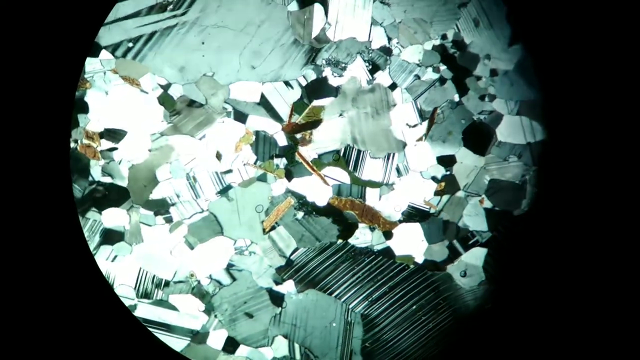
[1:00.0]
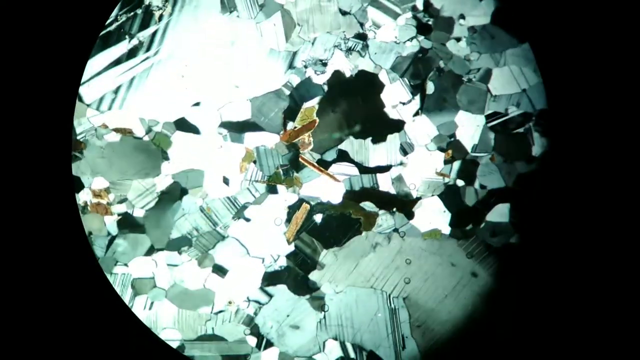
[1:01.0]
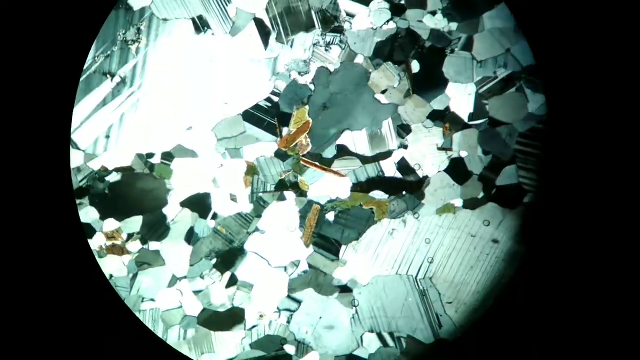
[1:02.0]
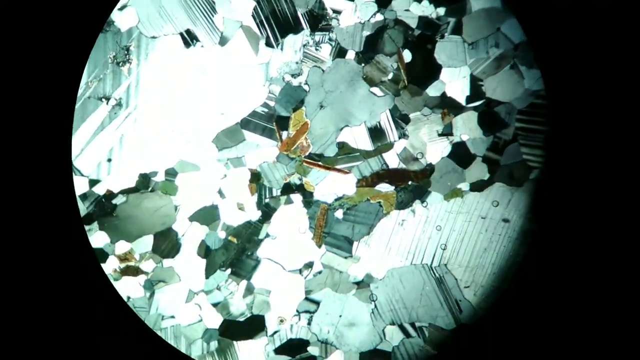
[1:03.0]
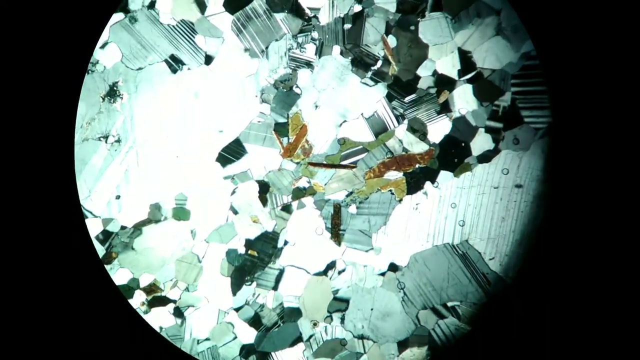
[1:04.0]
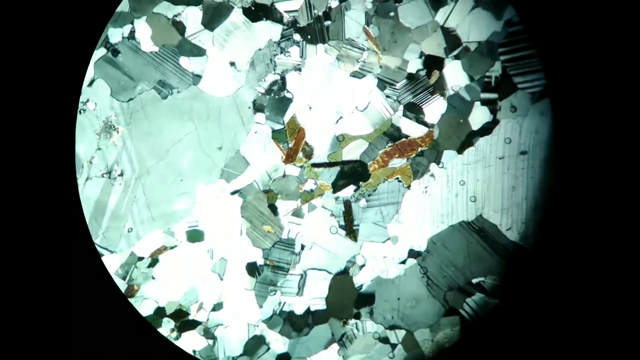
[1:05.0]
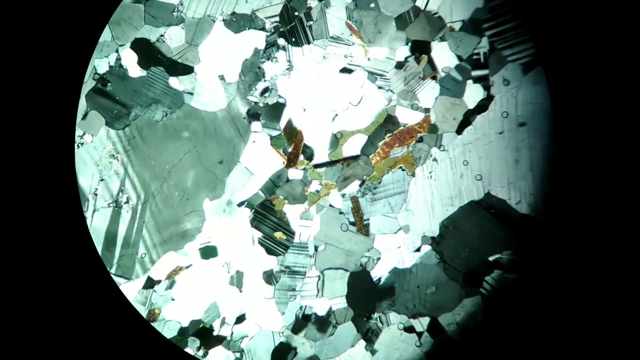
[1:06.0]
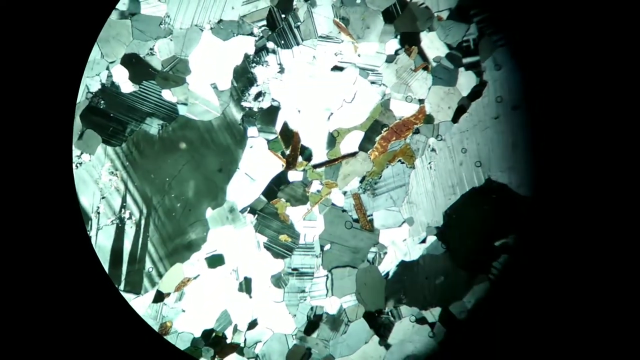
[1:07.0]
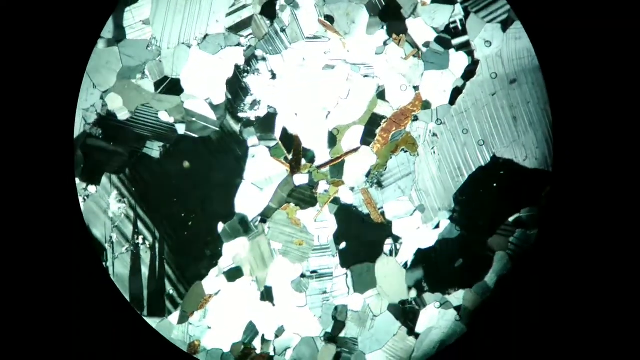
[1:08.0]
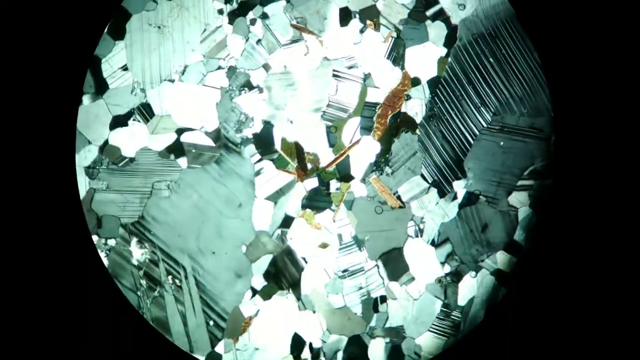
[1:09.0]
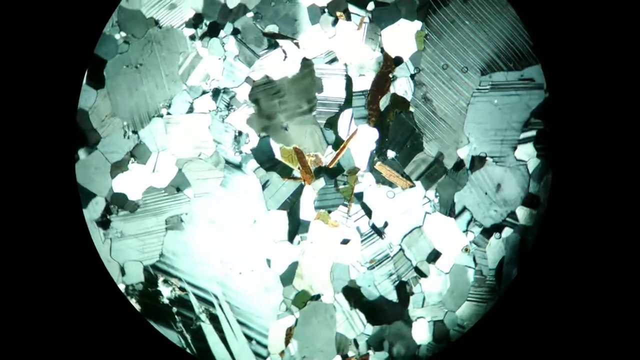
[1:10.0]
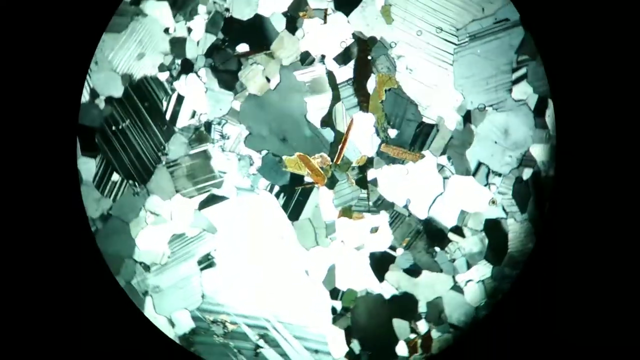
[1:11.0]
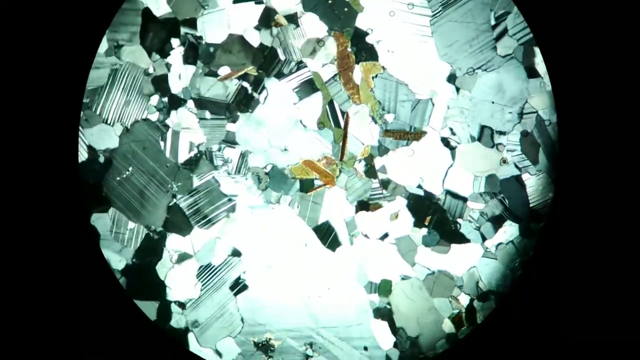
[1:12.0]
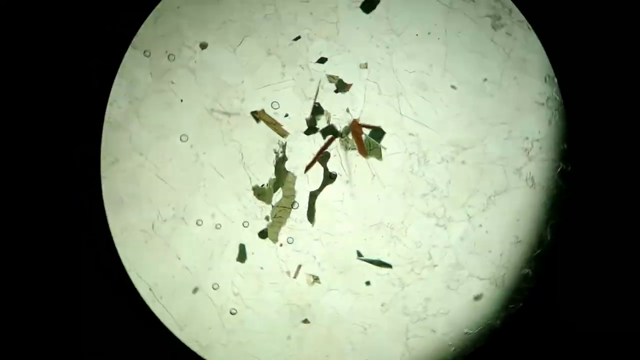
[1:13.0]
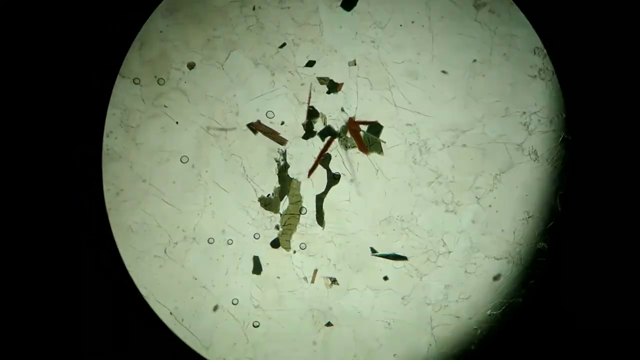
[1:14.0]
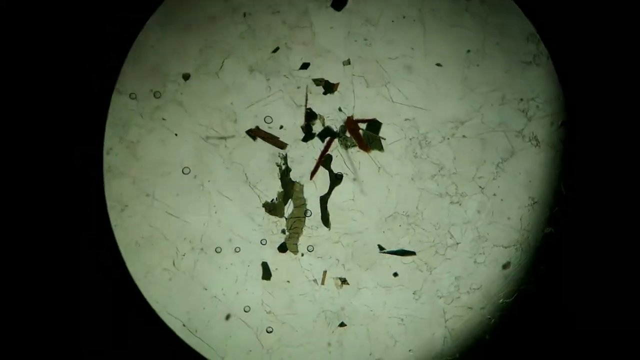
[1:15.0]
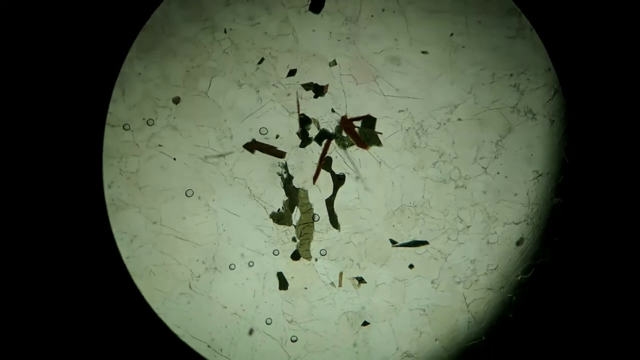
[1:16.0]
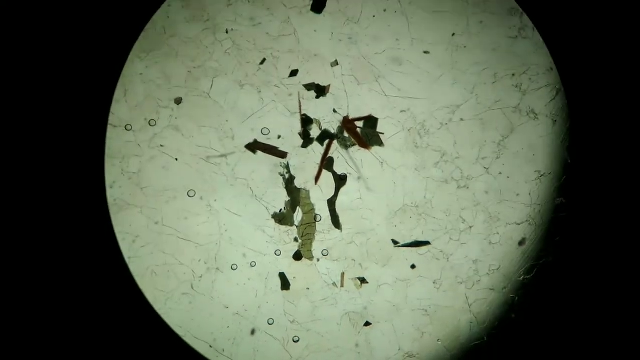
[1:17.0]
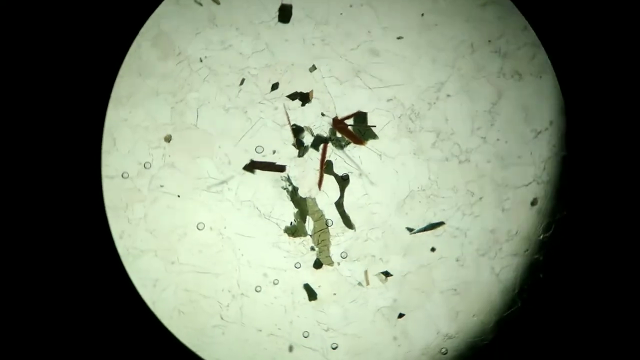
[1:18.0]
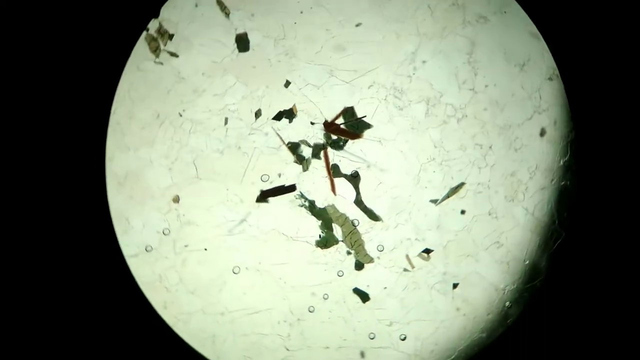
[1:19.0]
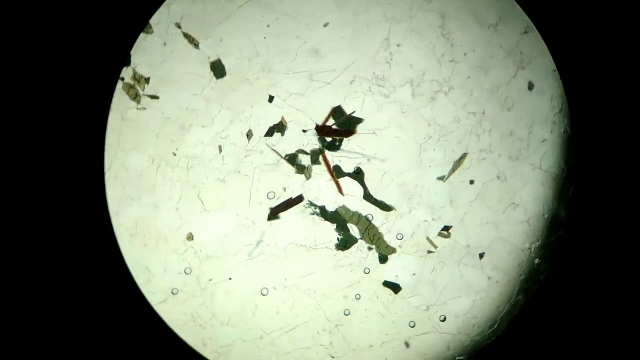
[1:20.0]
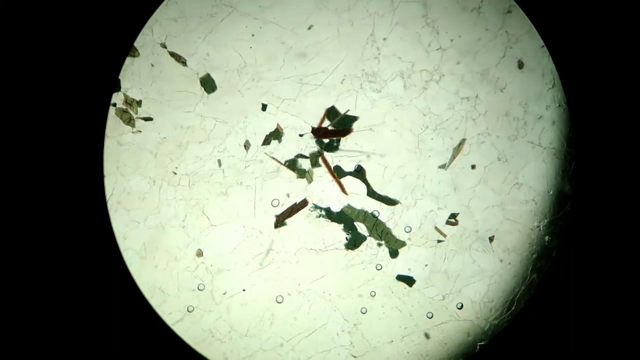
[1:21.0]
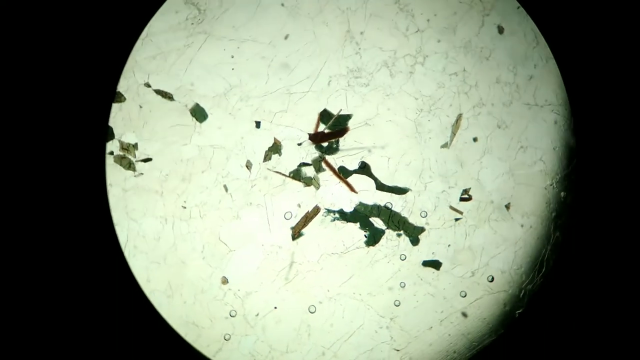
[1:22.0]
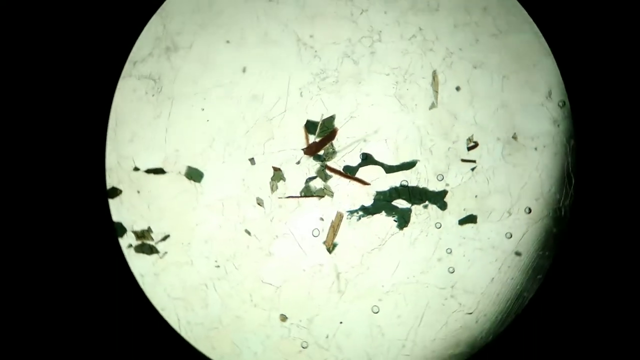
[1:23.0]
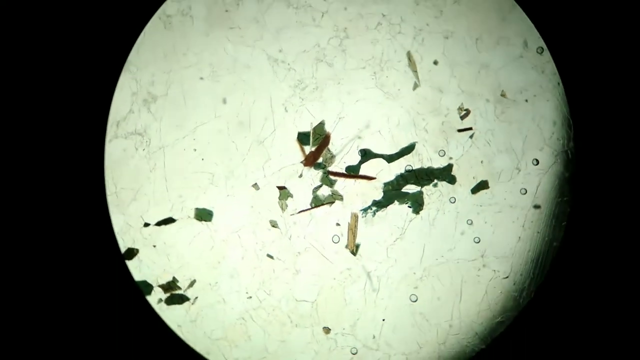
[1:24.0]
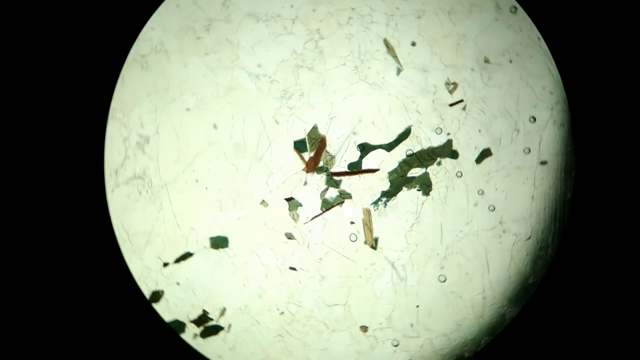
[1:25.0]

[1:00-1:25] A substance, apparently some type of material, is shown under high magnification under a microscope, revealing its imperfections. Partway through, the magnification pulls back to a less intense view, showing that the material actually looks smooth. Then the magnification intensifies again, giving a very close-up view that brings out the imperfections. The material is several shades of green, from dark to light to very light green, with some brown and yellow parts very sparsely throughout.